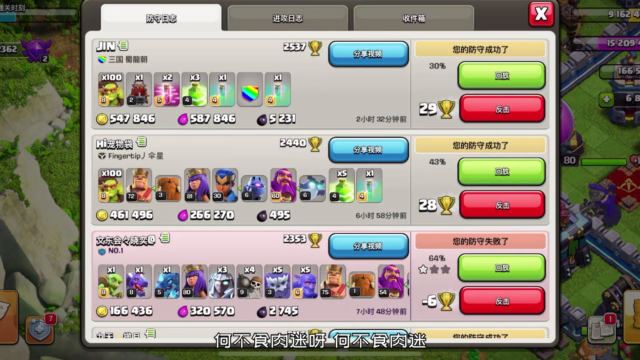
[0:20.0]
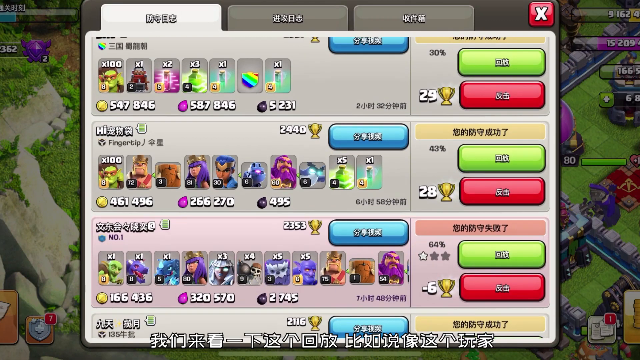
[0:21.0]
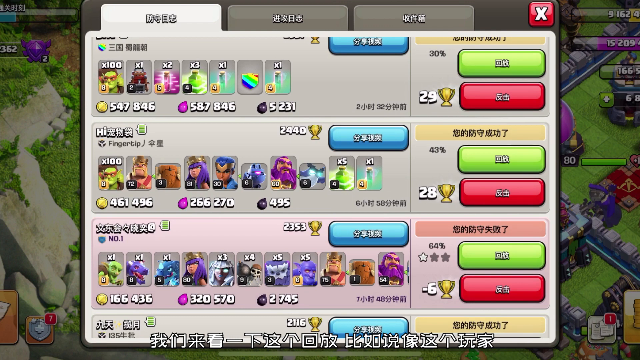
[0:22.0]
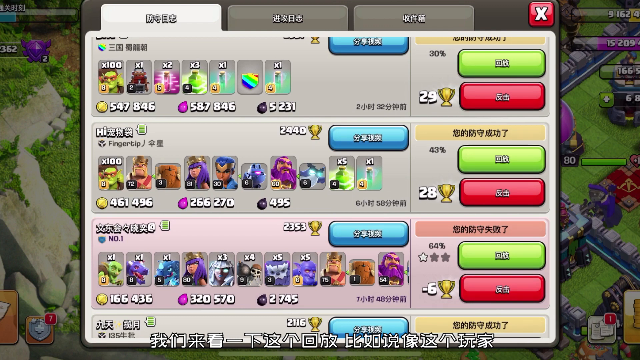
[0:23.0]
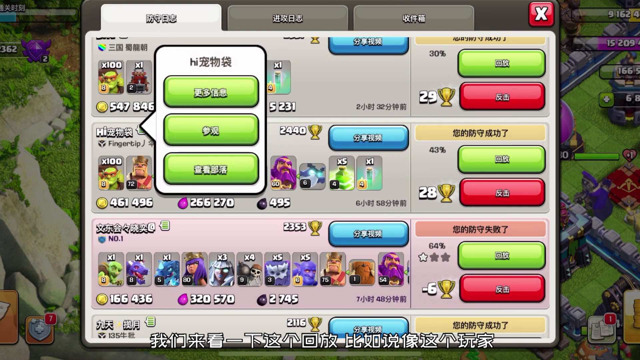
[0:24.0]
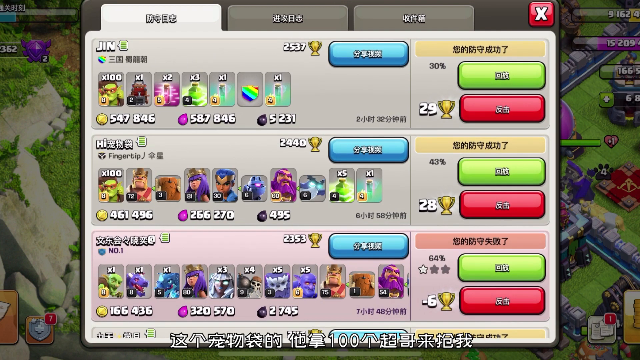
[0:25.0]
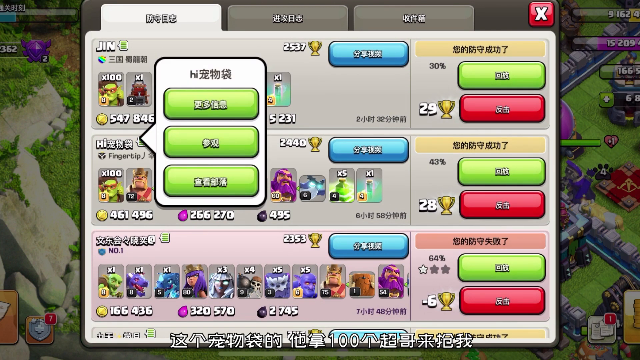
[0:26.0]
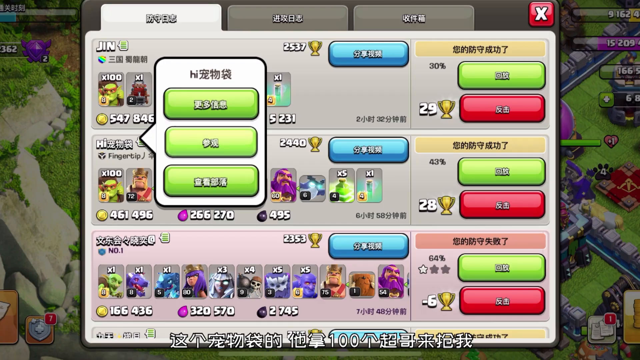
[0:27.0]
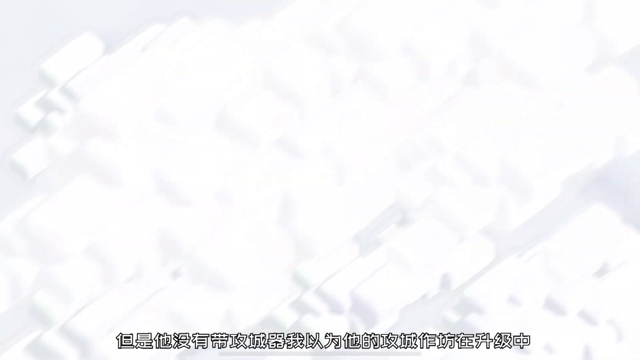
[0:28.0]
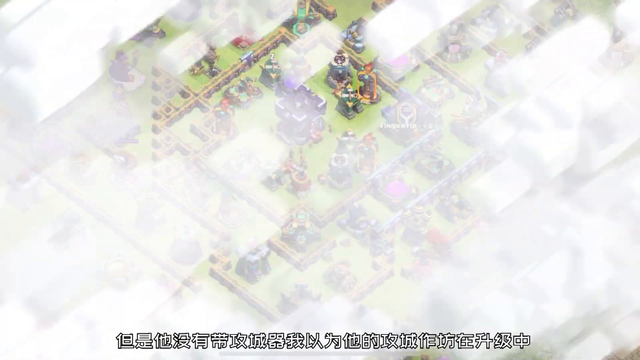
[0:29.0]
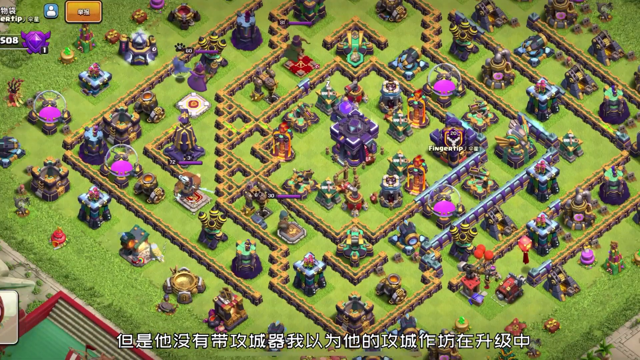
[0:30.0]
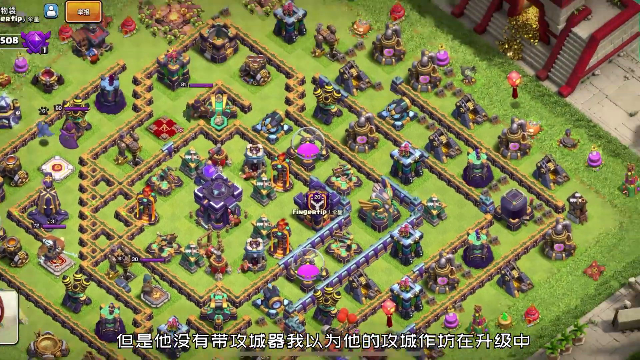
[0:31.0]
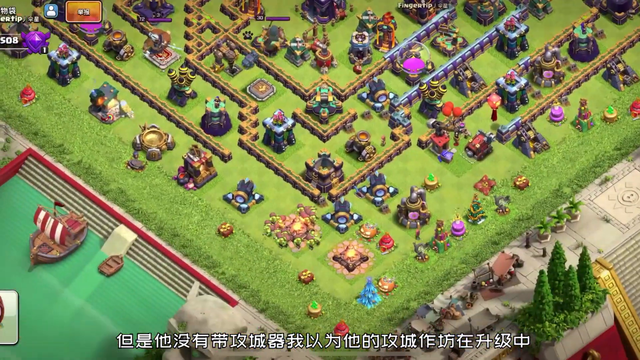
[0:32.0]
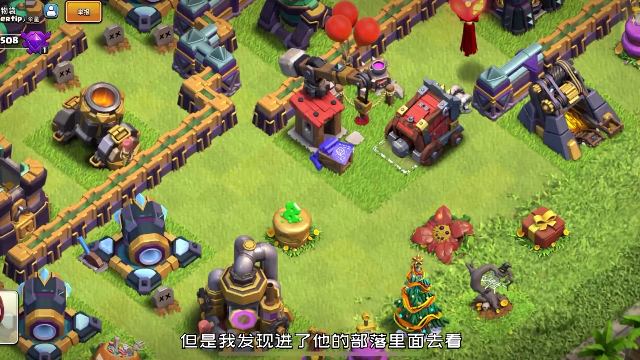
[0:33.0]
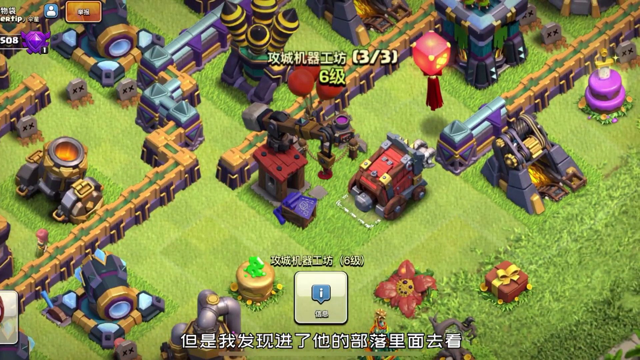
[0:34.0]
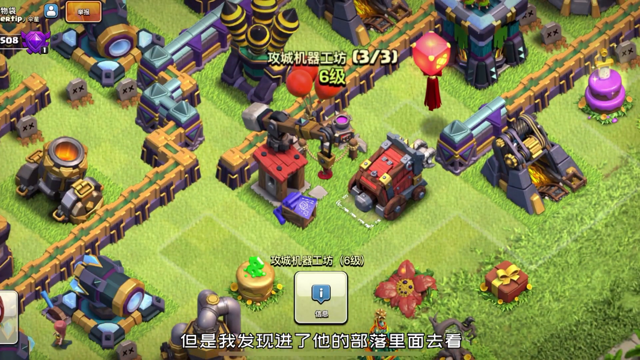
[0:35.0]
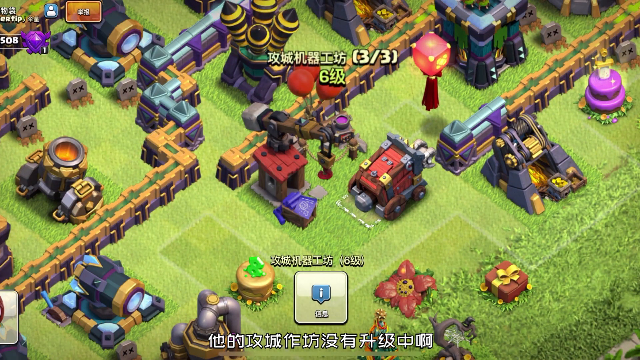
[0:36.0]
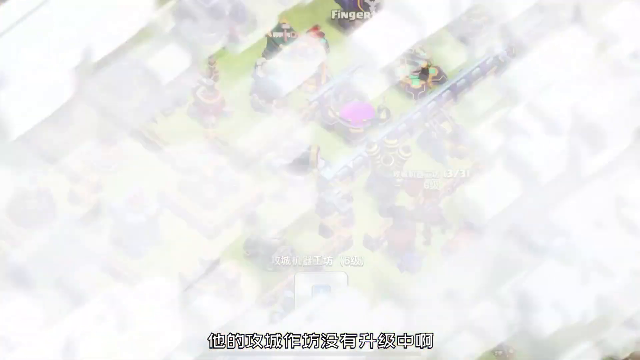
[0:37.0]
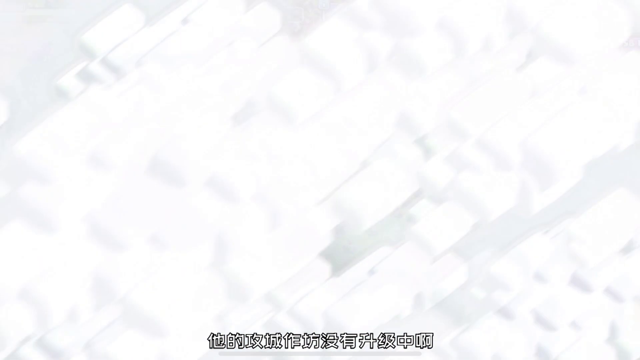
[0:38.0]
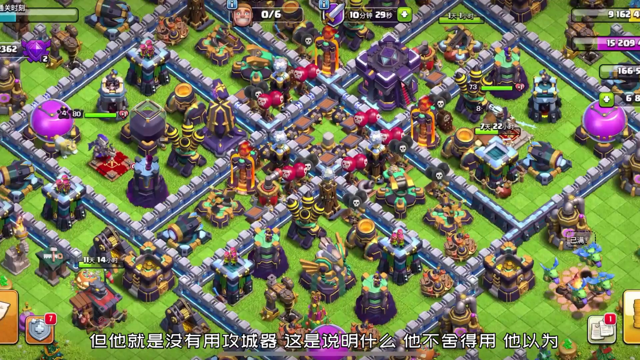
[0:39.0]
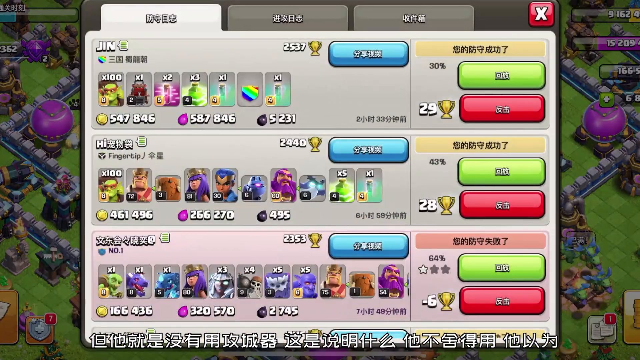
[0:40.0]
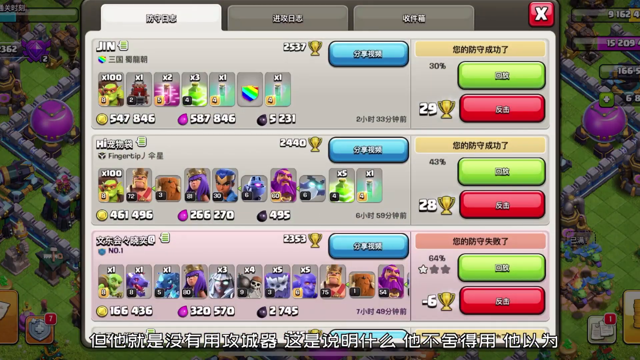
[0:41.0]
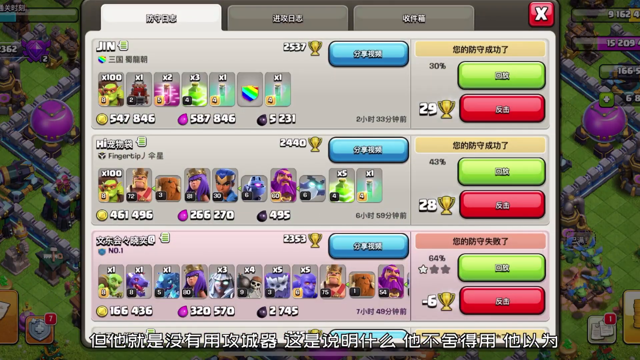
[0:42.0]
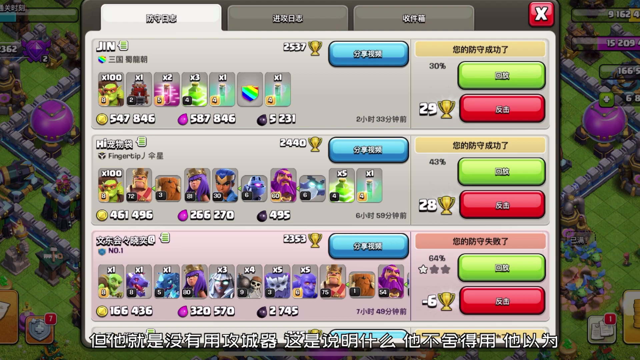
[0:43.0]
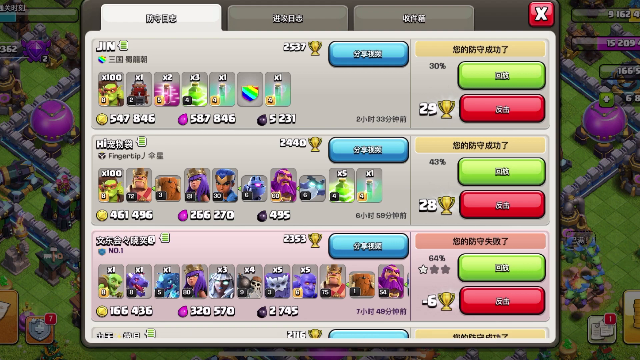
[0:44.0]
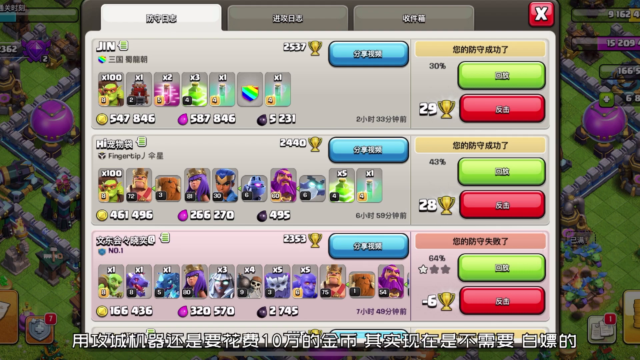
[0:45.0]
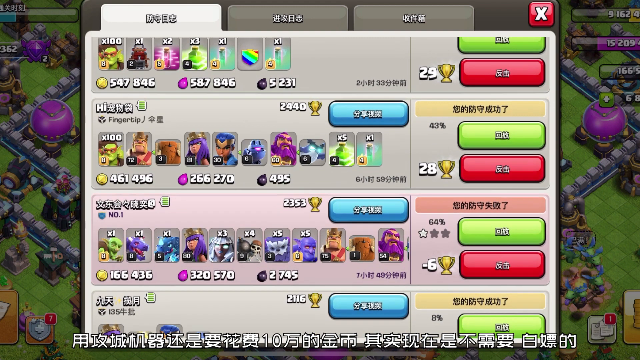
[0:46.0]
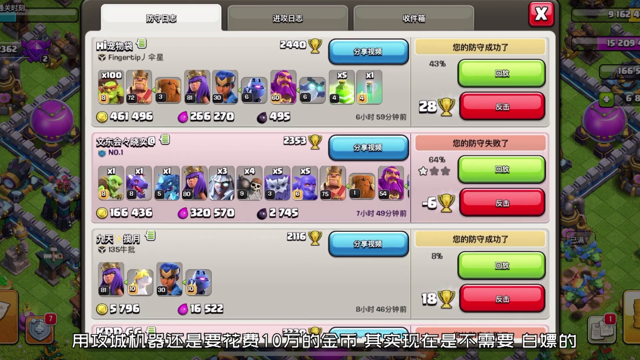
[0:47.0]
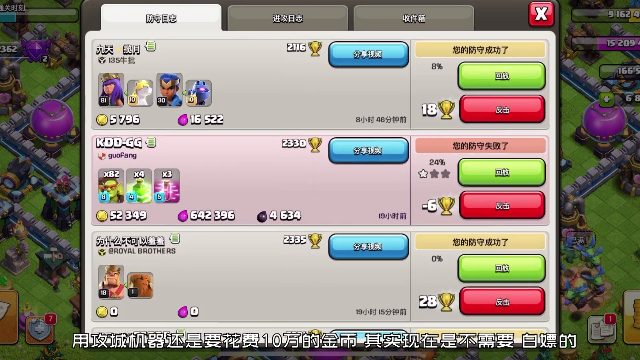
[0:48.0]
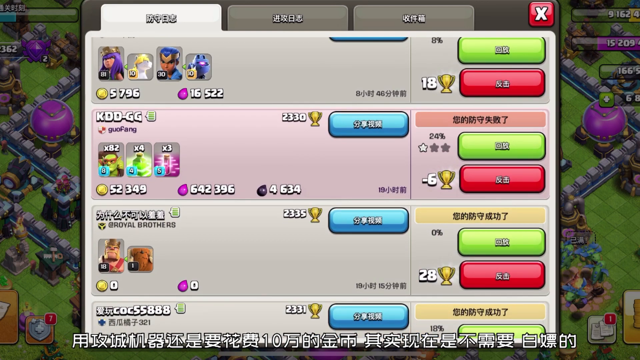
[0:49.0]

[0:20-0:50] The pop-up screen is still showing, with three rows of options: about seven in the first row, about 10 in the second and 11 in the third. Each row has a blue button at its top right and a green and red button at the far right. Numbers appear below each symbol image and box, multipliers appear above each symbol, and a trophy next to the green and red buttons shows a number. A speech bubble comes up and a green button is clicked. The view switches to an aerial view of the video game, again with a green background, and zooms in to a specific red and brown item with a lever. Text in what looks like an Oriental language appears along with "three out of three", then the screen flashes and goes white. The aerial view of the game returns, and the same pop-up with the text, little symbols and numbers comes up again. It scrolls, revealing more options at the bottom: four selections, then three selections in each of two rows. The pop-up's background is a light gray, and the symbols are colorful and all different.